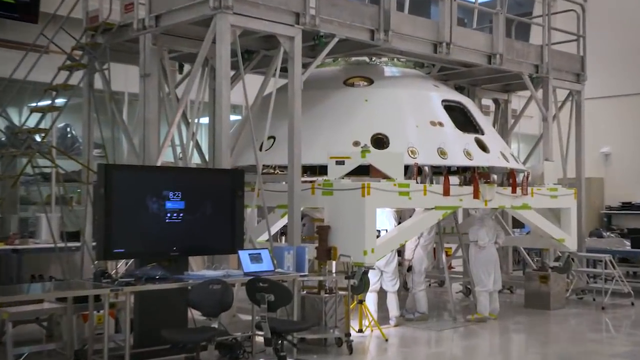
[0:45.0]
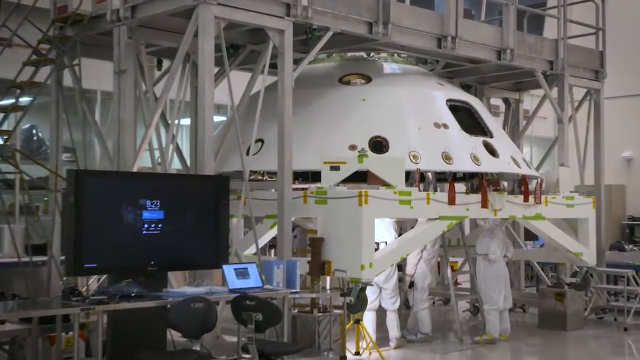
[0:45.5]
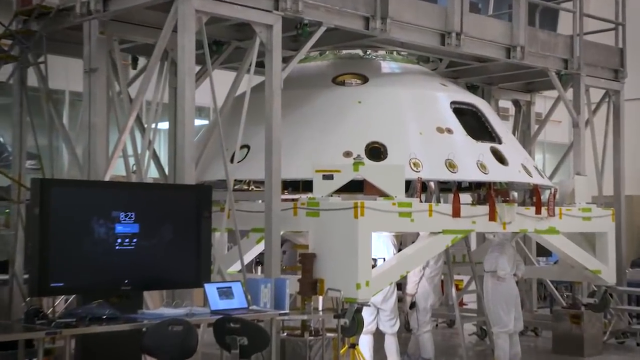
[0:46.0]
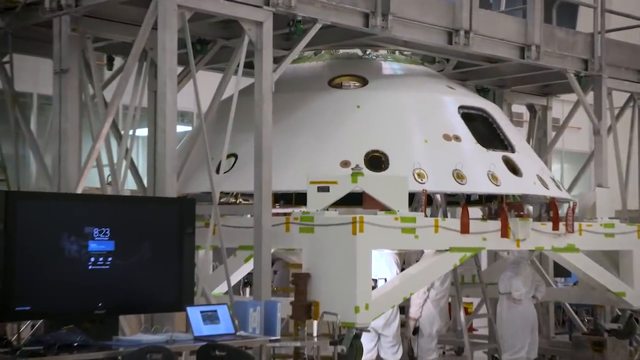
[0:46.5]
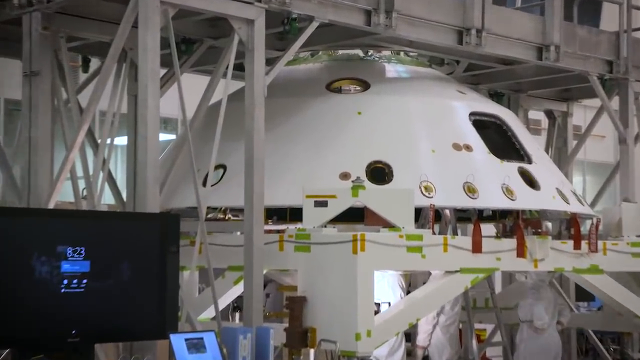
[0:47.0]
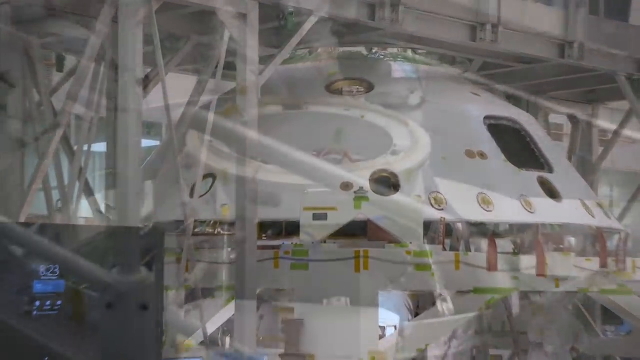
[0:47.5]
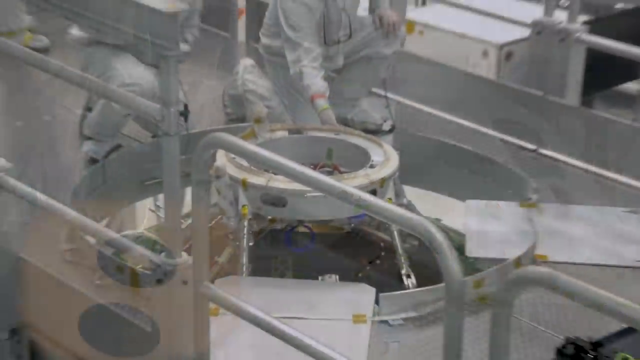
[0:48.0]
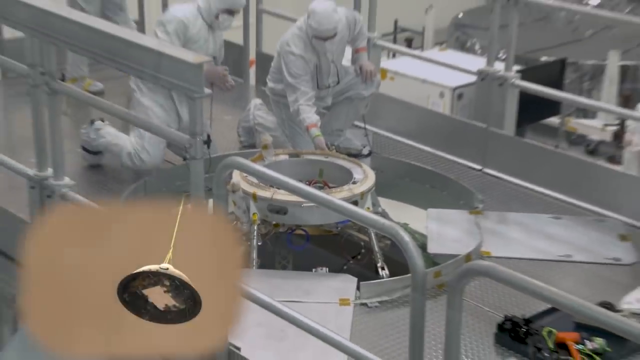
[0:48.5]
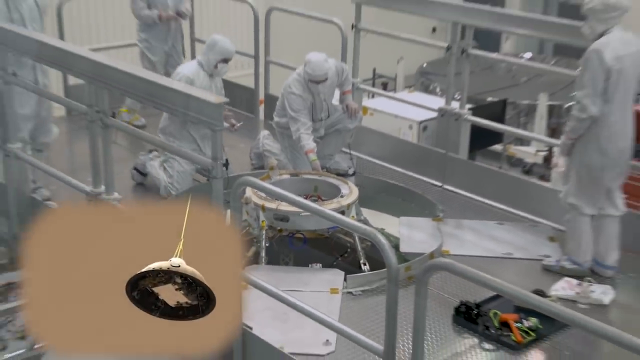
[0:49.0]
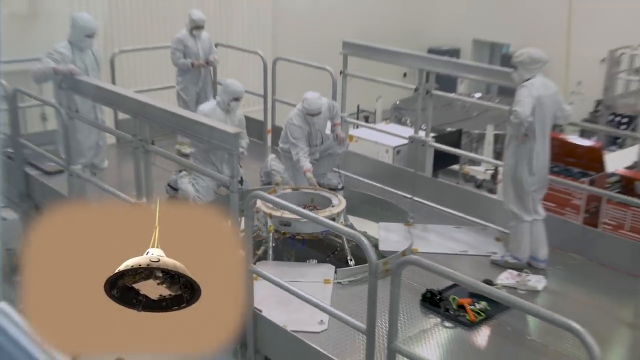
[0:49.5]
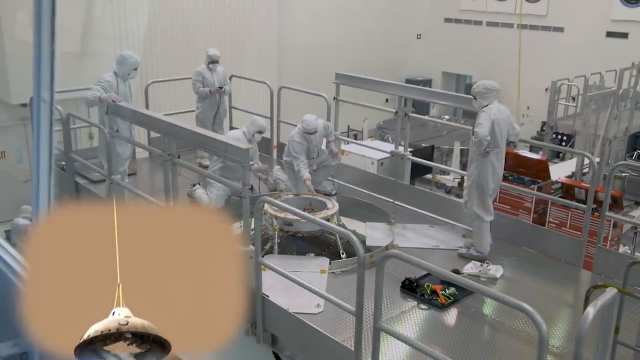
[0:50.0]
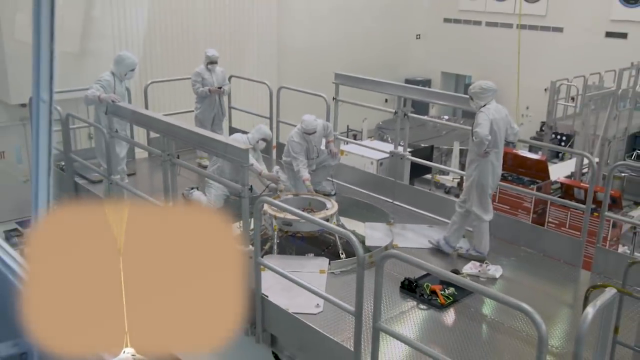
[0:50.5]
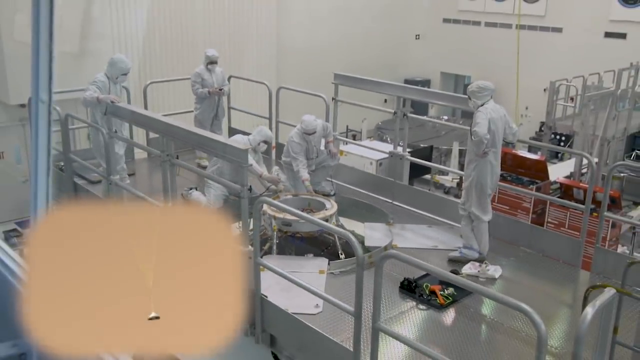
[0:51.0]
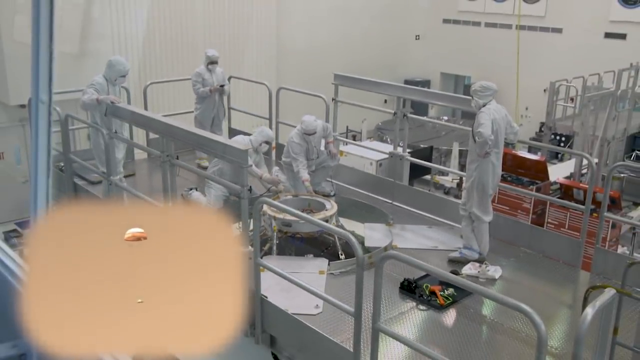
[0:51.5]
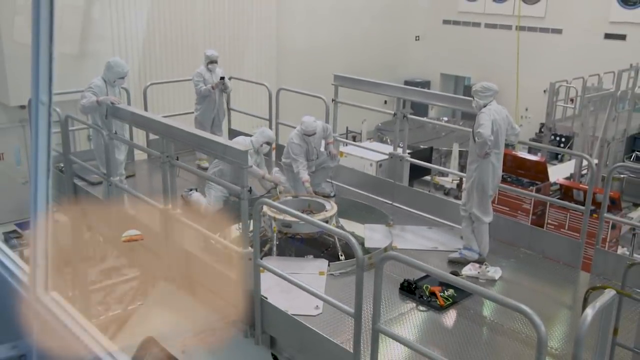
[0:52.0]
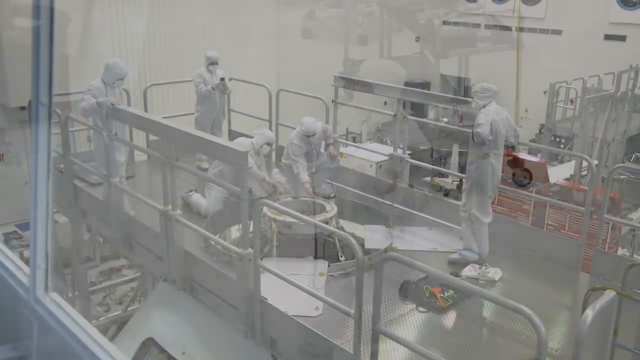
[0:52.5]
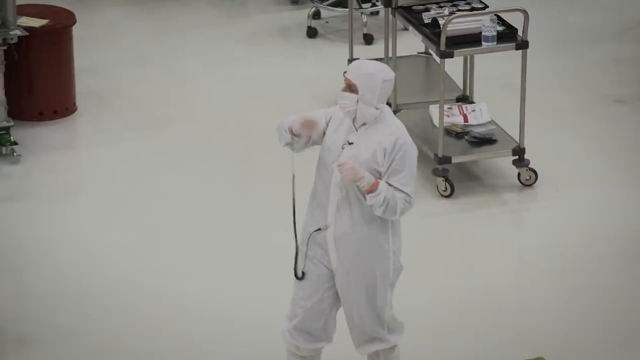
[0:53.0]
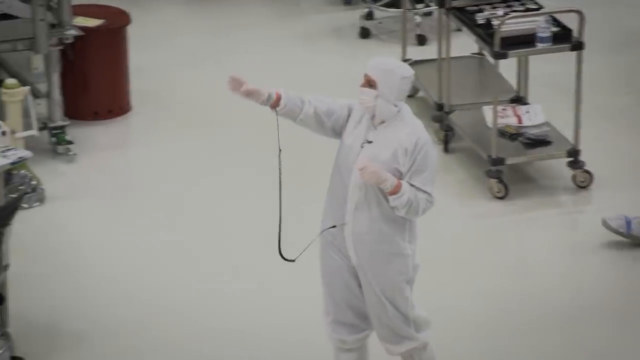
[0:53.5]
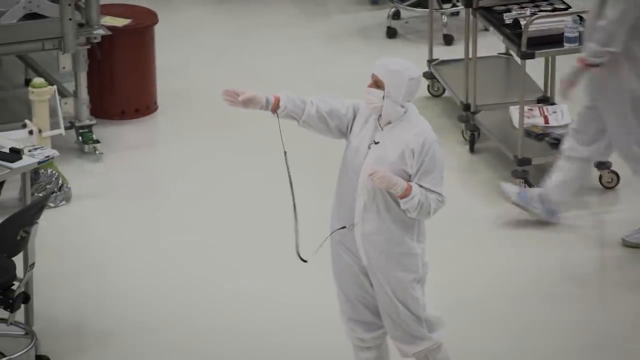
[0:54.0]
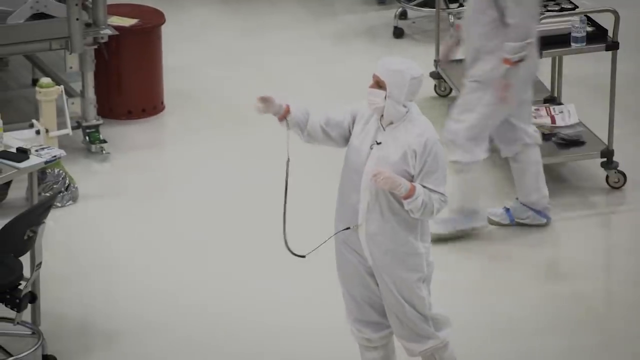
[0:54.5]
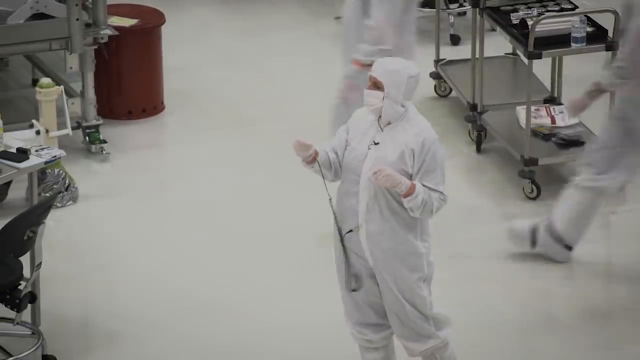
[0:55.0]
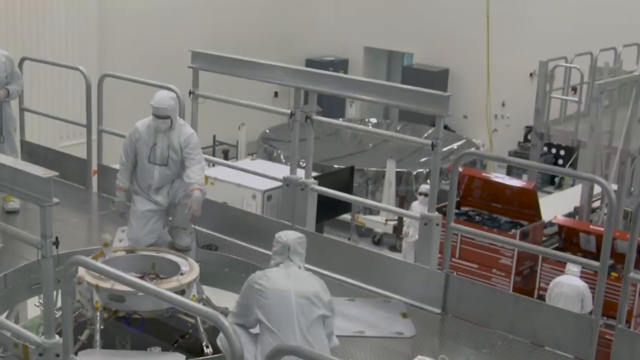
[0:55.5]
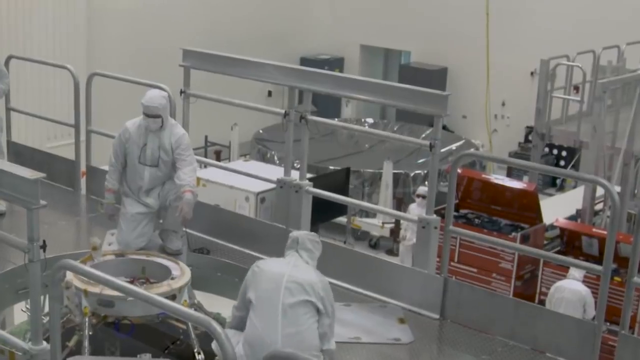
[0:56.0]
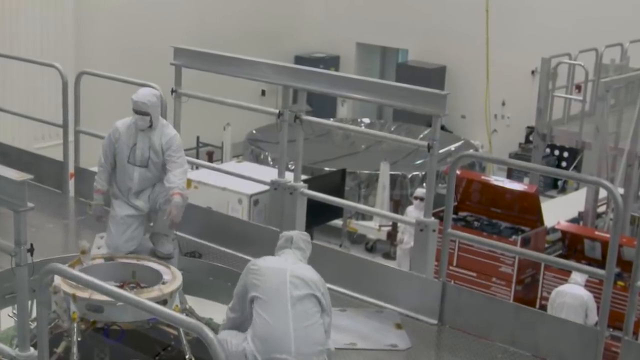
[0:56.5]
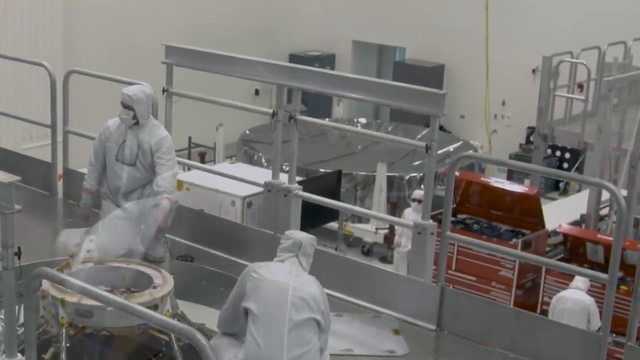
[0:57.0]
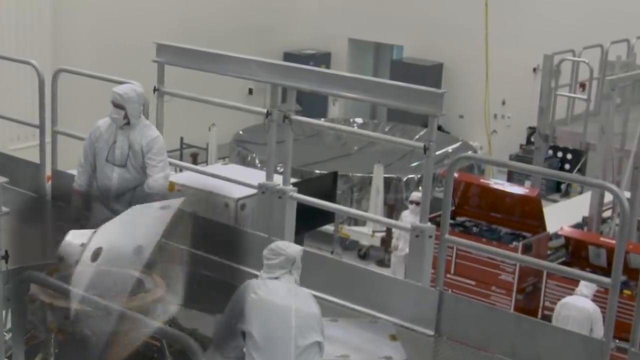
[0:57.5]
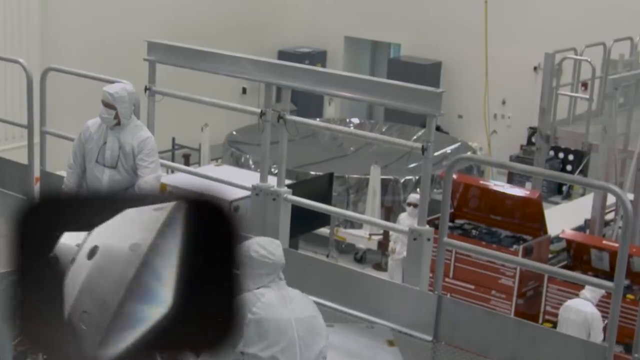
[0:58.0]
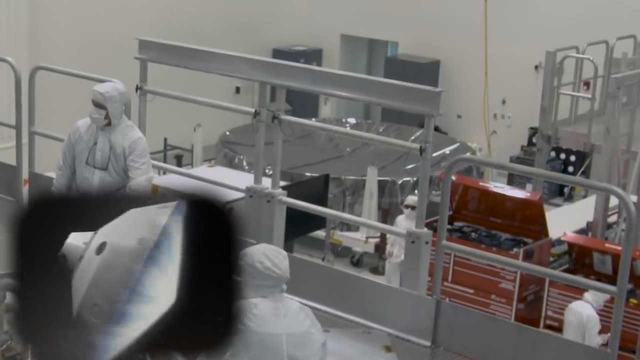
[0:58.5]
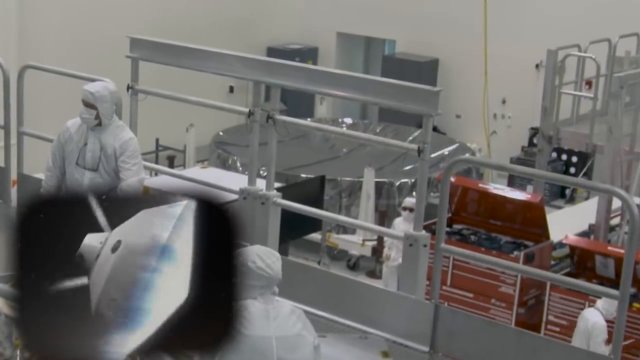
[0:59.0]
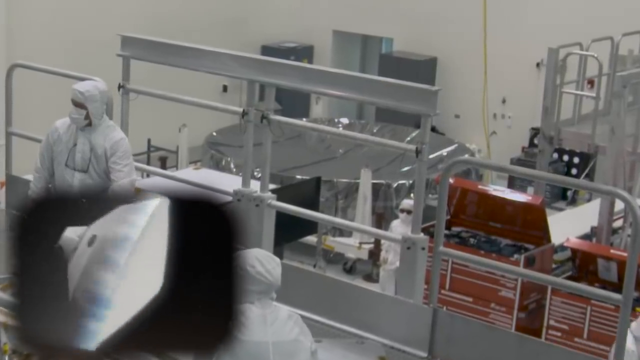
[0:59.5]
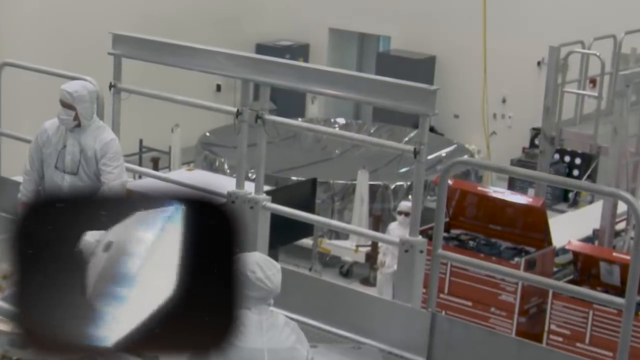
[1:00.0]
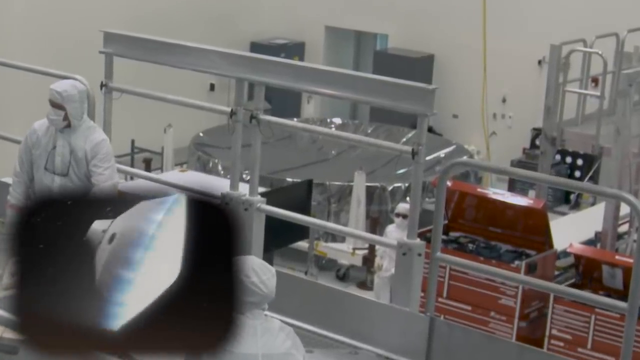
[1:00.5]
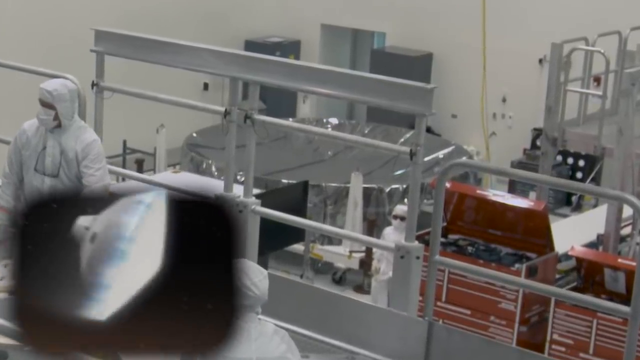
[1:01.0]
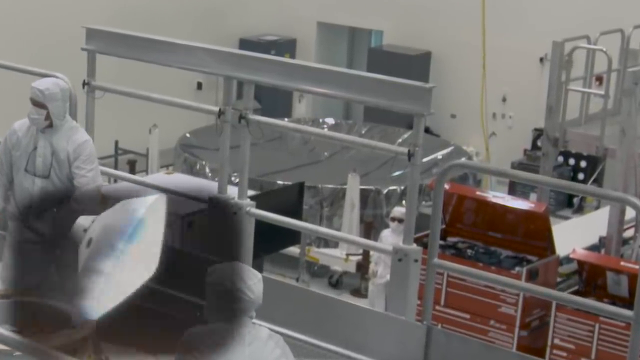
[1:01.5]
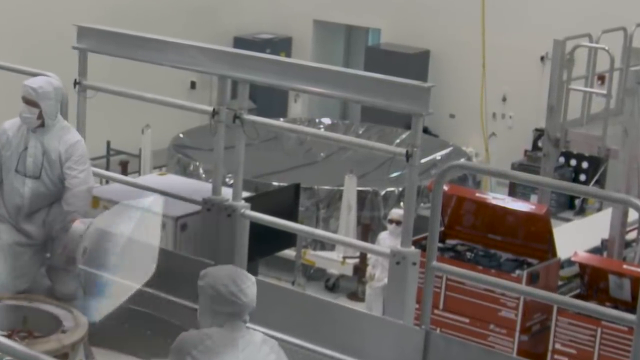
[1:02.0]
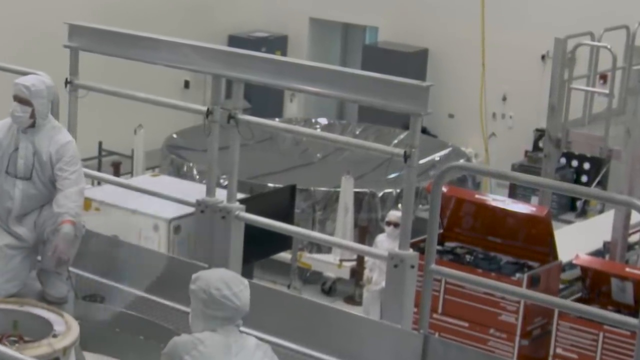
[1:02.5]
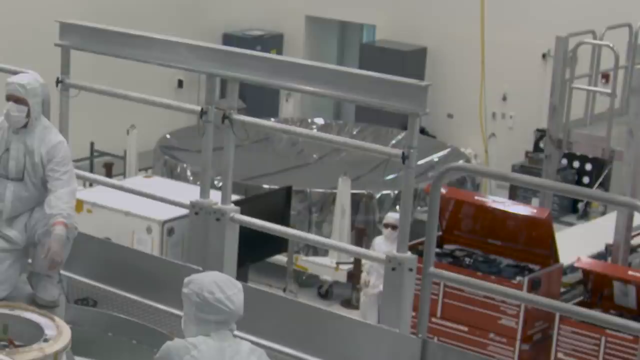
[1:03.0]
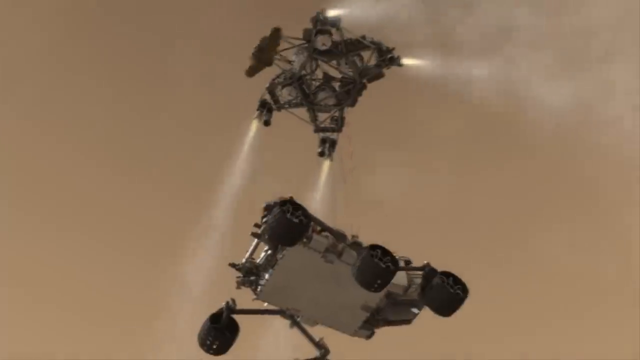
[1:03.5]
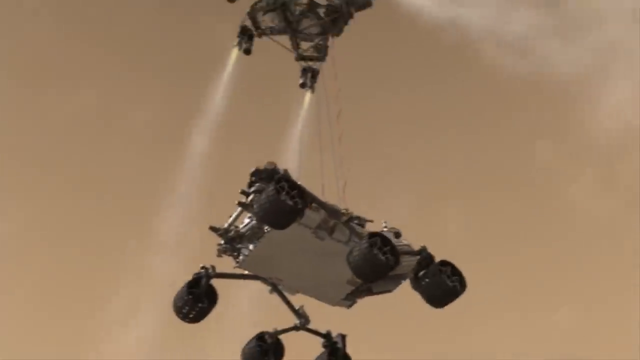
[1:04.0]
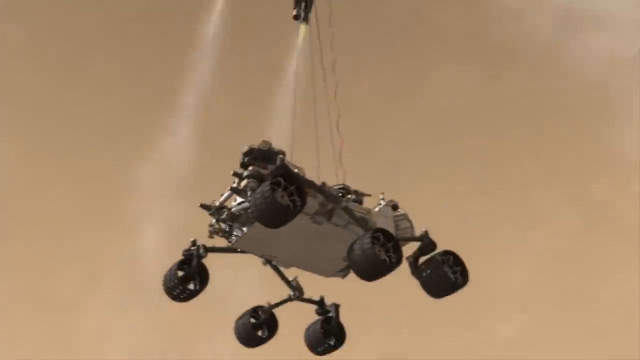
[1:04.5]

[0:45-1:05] The white shell is shown in one part of the facility, followed by a picture-in-picture illustrating how the white shell will come down and land on the surface of Mars, with a parachute shooting out of it to slow it down. Another picture-in-picture shows the white-shelled object coming through space; its bottom is apparently a heat shield, deflecting the heat to keep the cylinder-type object from burning up as it comes down through the atmosphere. Then another image shows a third vehicle landing on Mars: a wheeled, rover-type vehicle that looks like it is being lowered down, hoisted by another spaceship that shoots flames out of all four of its corners to slow down and gently place the vehicle on the surface.